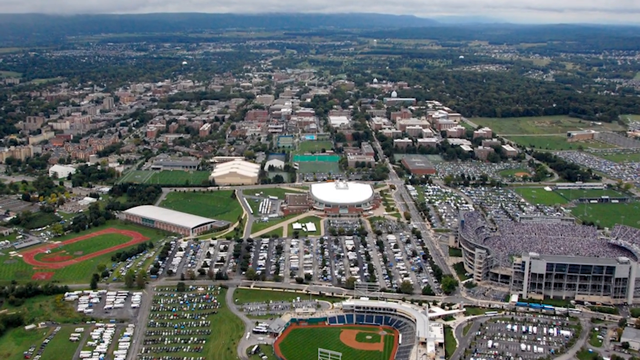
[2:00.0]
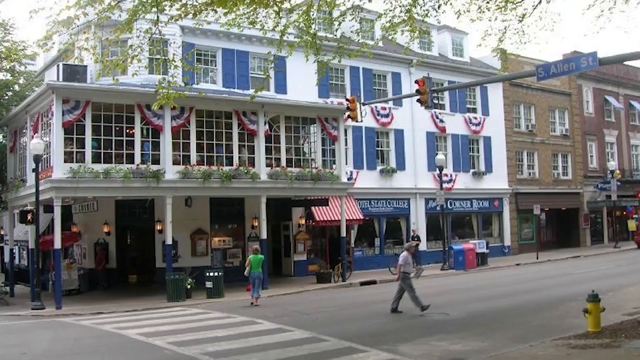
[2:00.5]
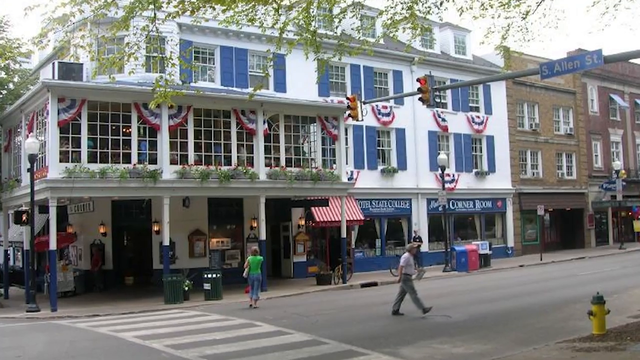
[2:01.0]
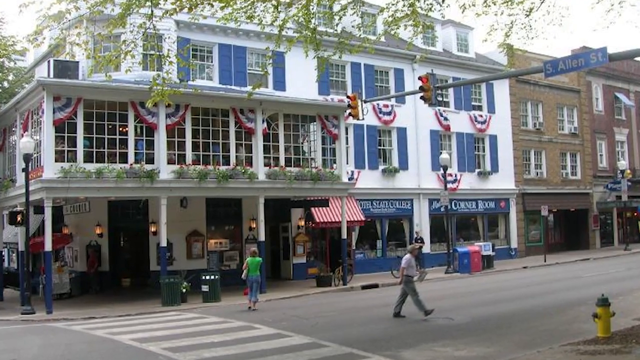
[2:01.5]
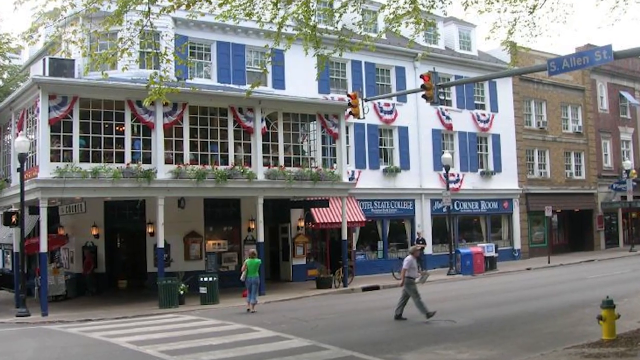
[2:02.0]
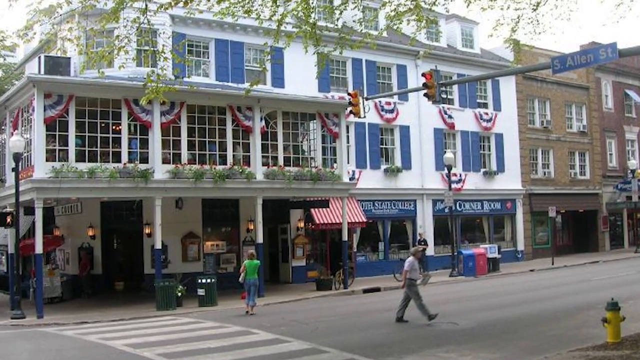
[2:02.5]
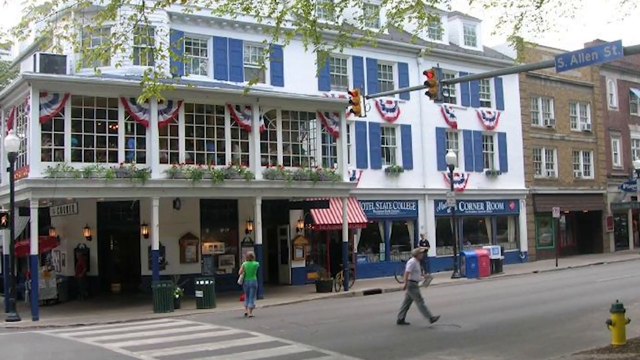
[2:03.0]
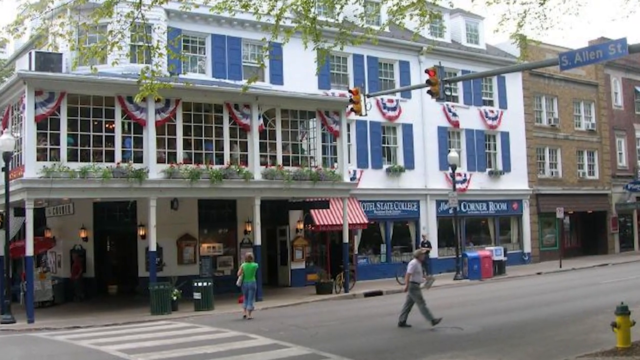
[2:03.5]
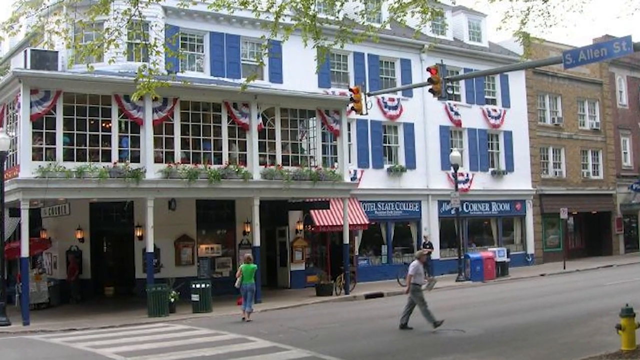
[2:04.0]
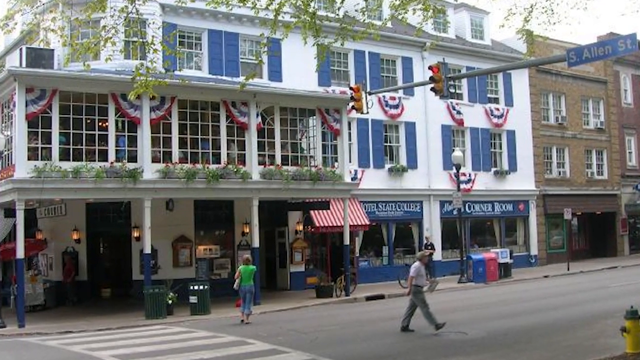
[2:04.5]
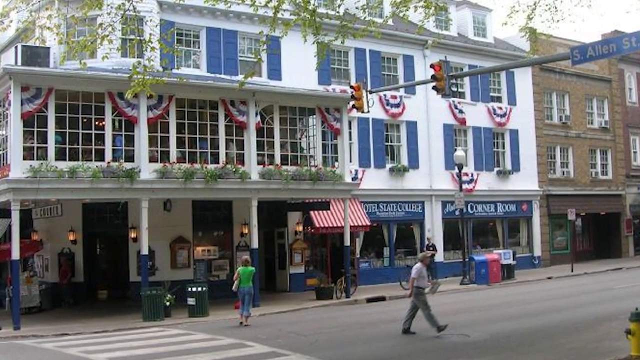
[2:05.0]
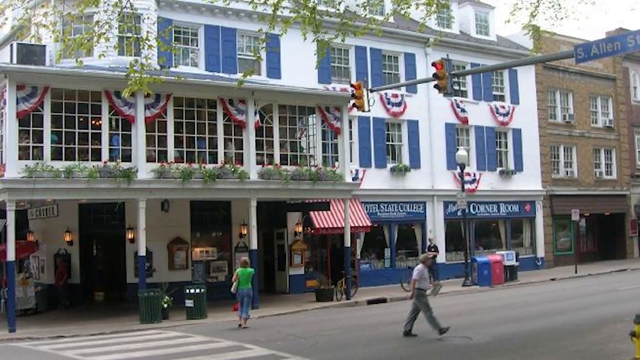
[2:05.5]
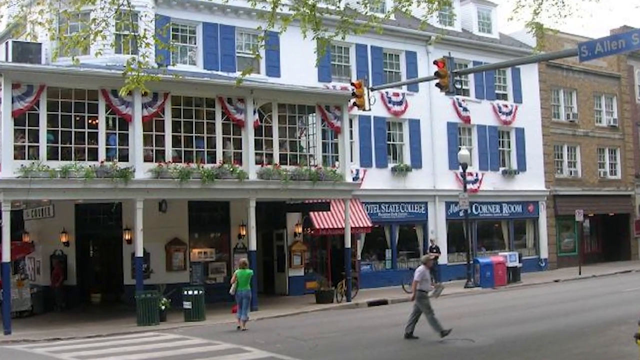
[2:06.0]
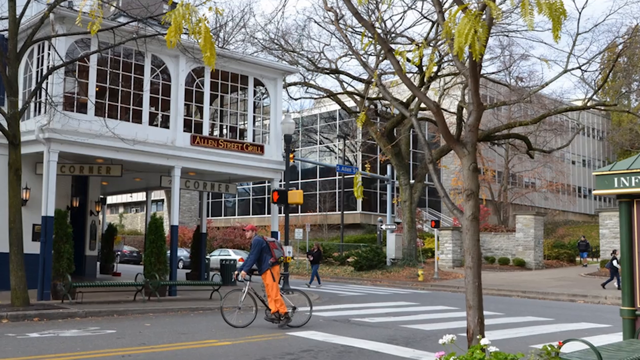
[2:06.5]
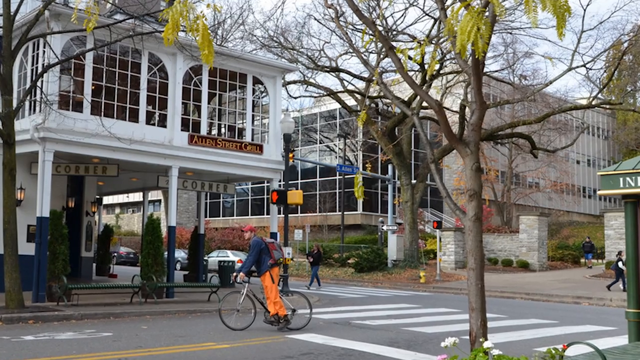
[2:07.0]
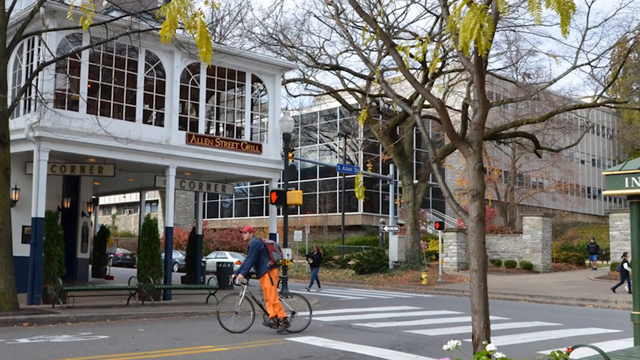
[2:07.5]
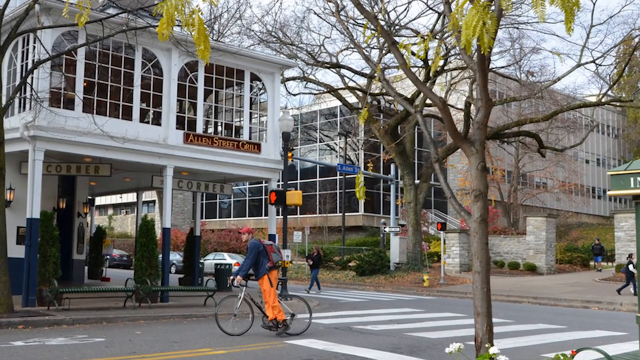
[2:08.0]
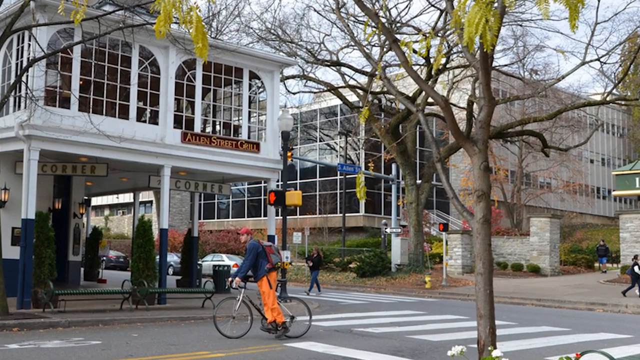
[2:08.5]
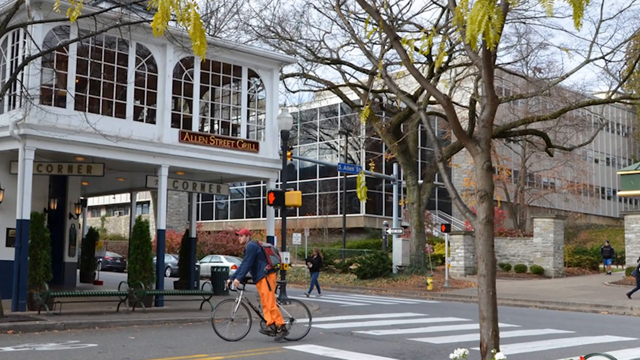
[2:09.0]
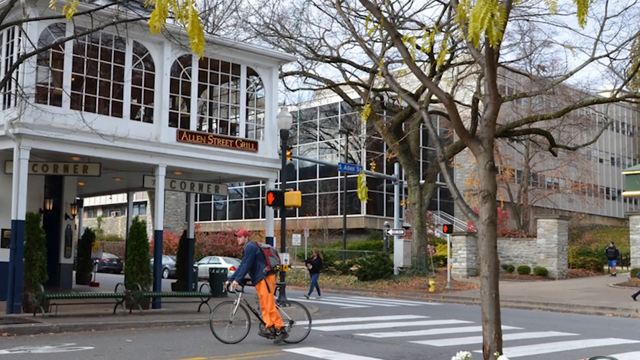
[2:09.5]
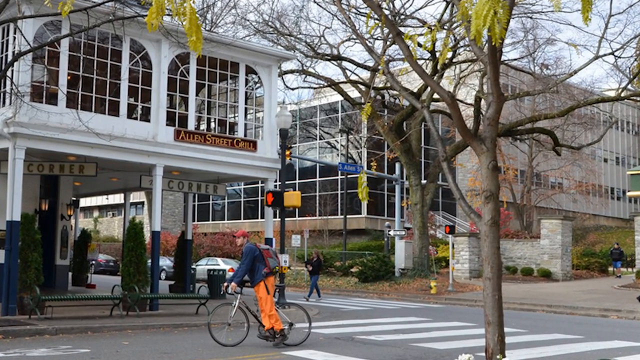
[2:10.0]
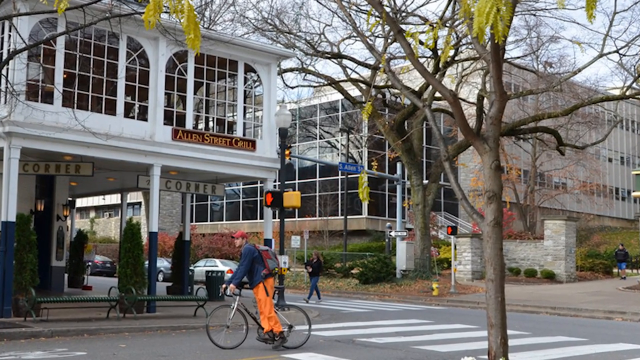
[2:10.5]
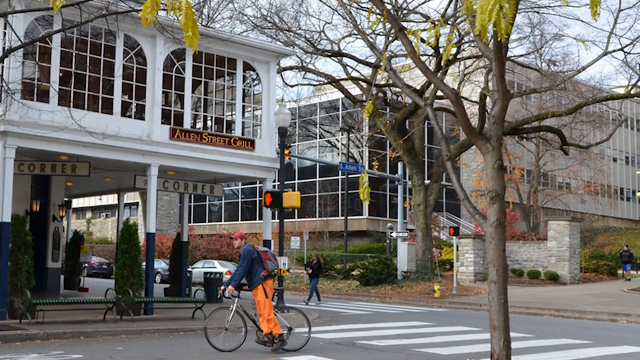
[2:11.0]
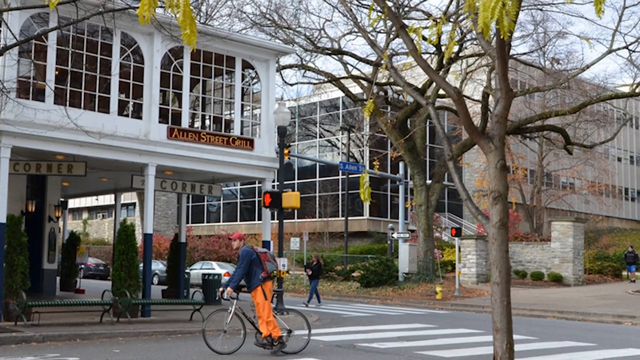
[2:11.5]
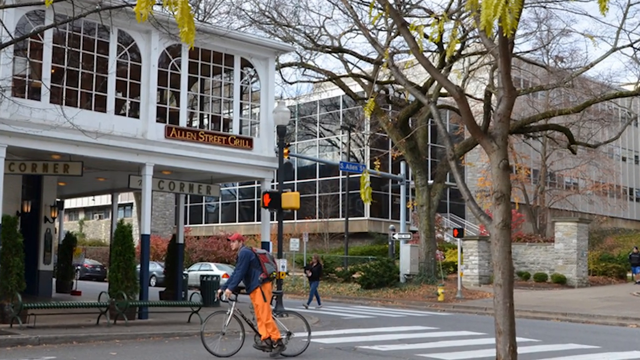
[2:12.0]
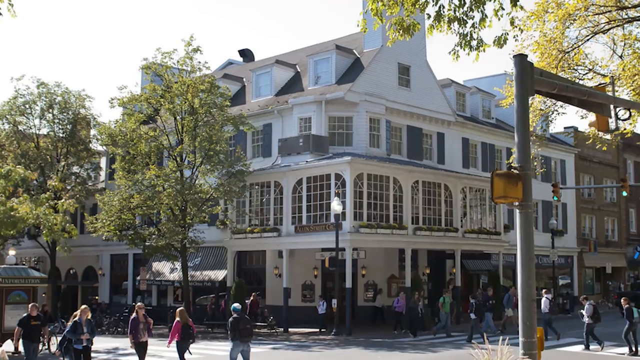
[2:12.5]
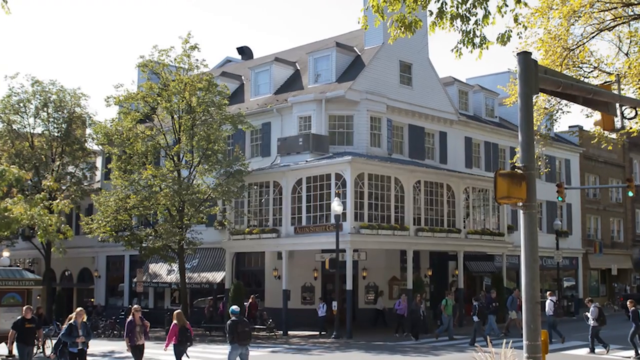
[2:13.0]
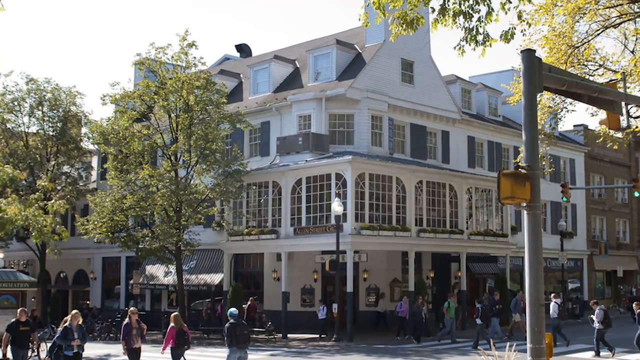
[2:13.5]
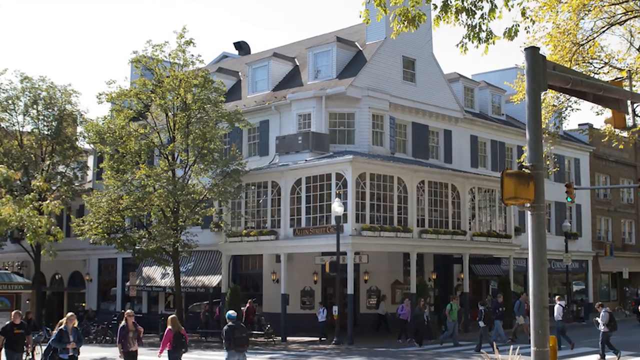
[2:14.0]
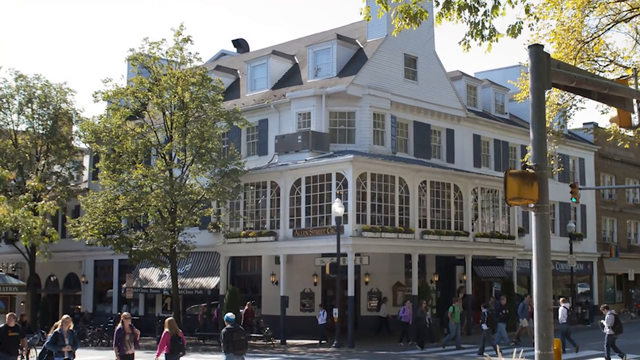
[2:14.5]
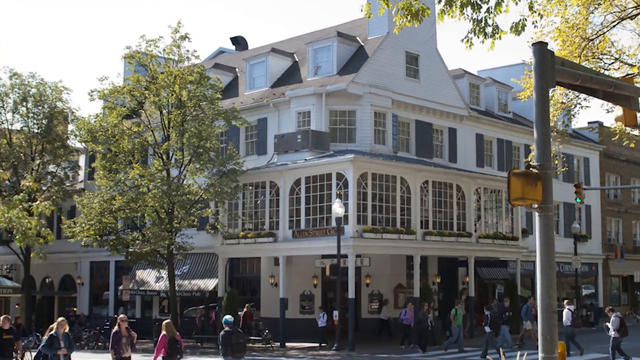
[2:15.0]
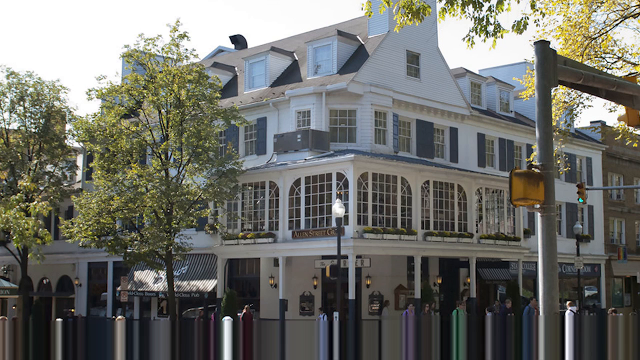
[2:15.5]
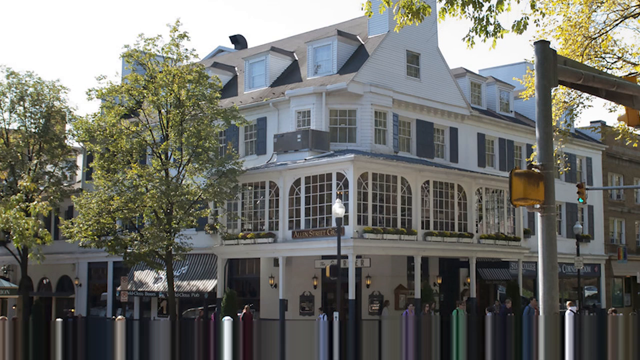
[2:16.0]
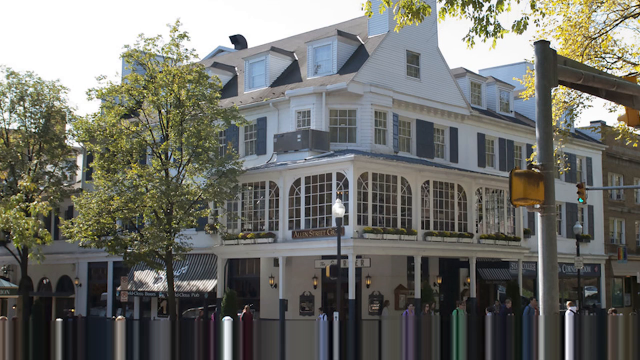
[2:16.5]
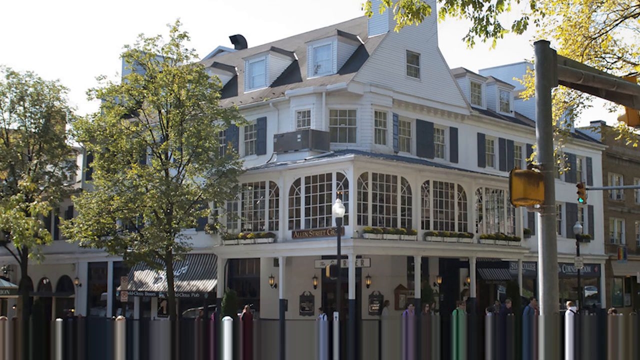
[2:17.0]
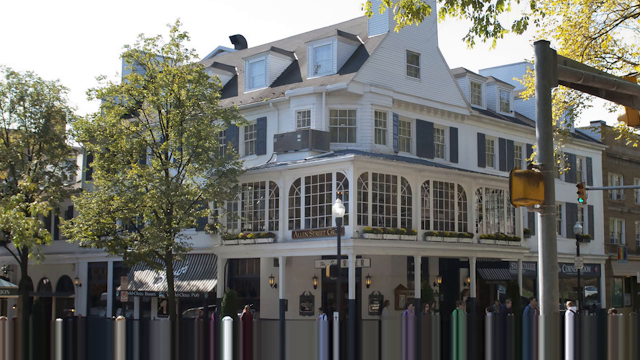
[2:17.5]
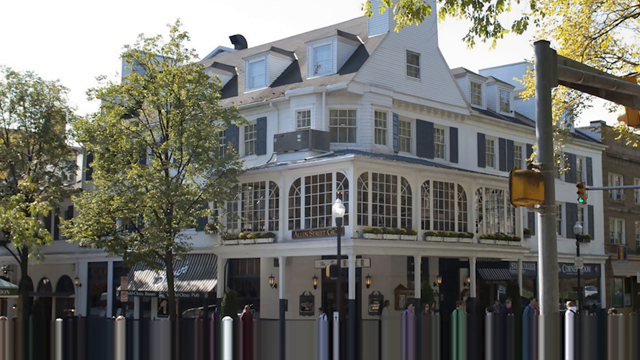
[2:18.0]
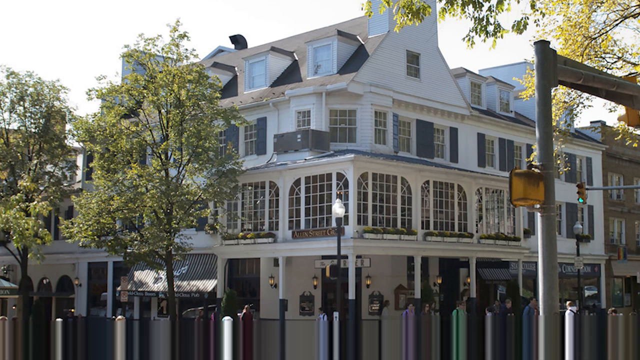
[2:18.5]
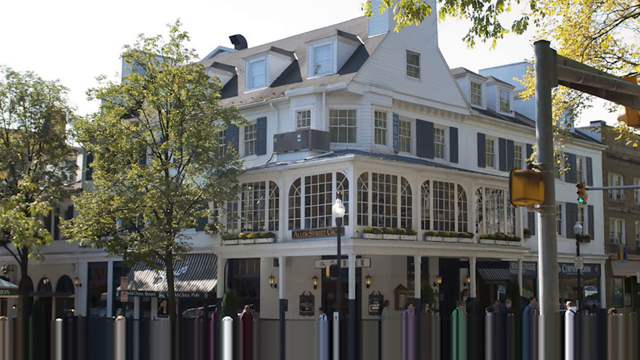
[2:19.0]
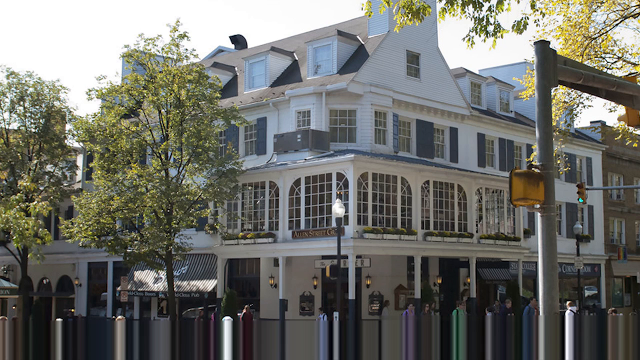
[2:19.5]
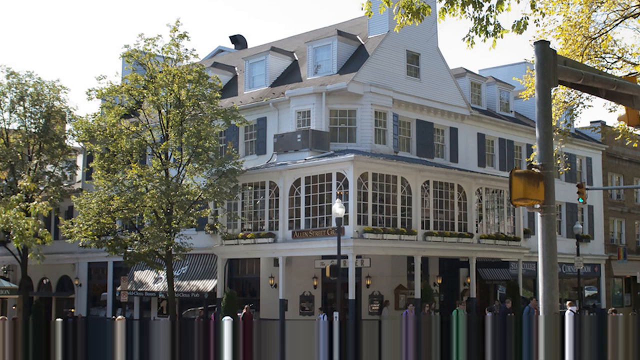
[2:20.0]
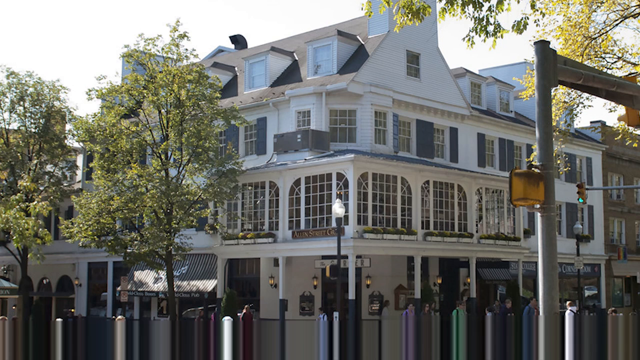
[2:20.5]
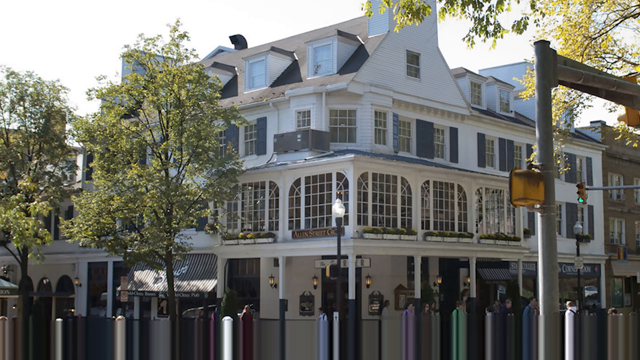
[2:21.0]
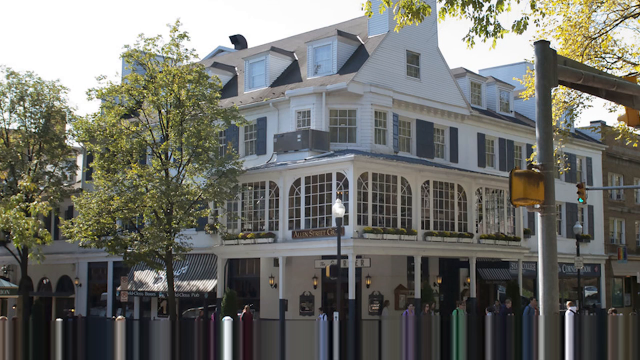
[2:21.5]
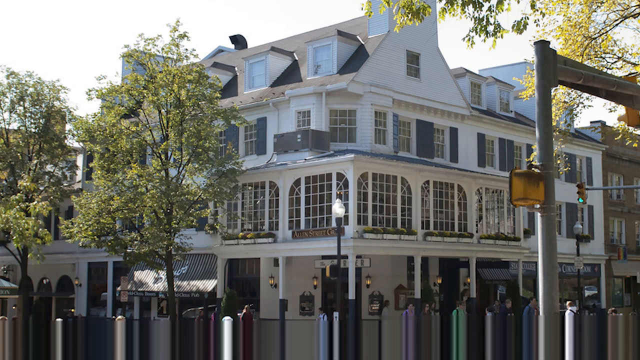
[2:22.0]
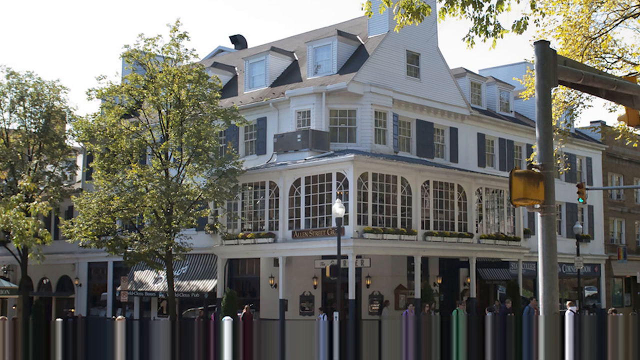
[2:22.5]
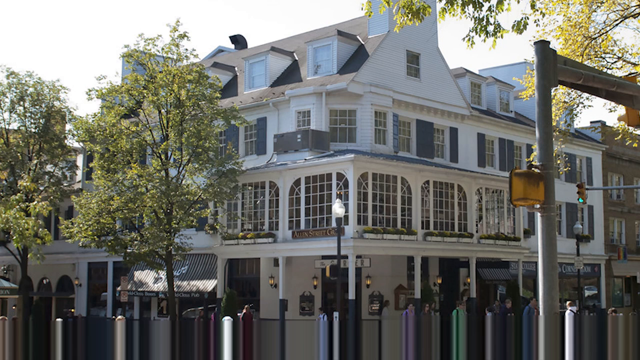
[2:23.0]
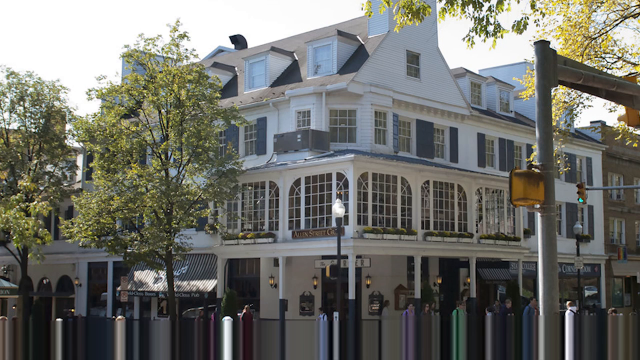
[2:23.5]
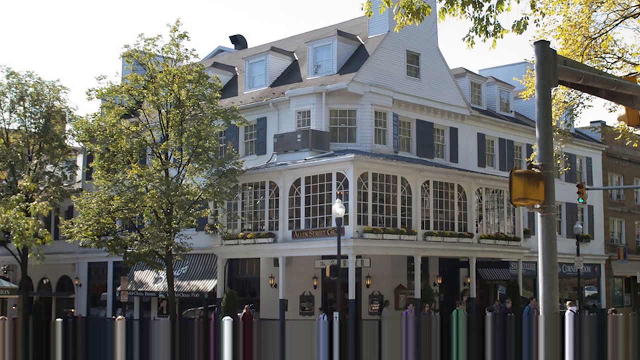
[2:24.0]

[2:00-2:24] The university is seen from the top. Then a street with a shopping center appears, identified as Alan Street, with some big robots on the street in front. Outside, some people walk out of stores and some go inside. There is a blue building with red and blue colors. As the camera gets closer, the whole Alan Street Grill building on Alan Street is seen, and then a shop at the Alan Street corner, a small shopping complex, with people walking around and going in and out of the building.